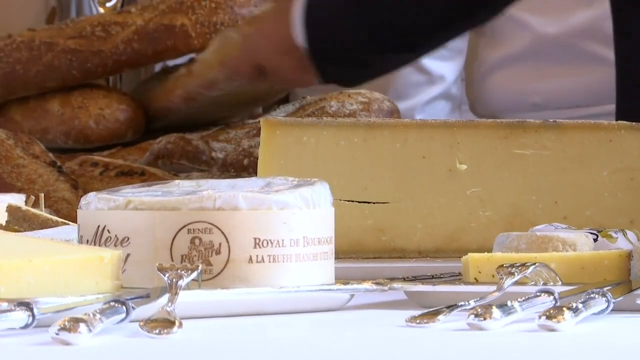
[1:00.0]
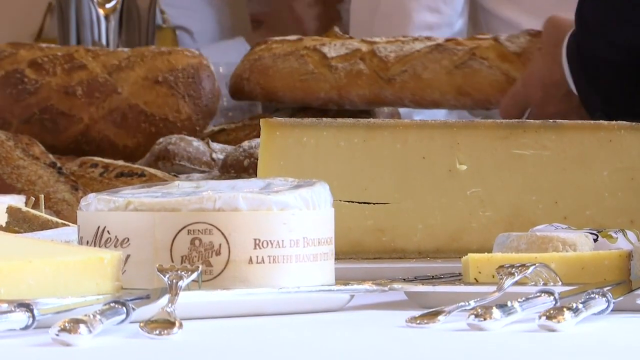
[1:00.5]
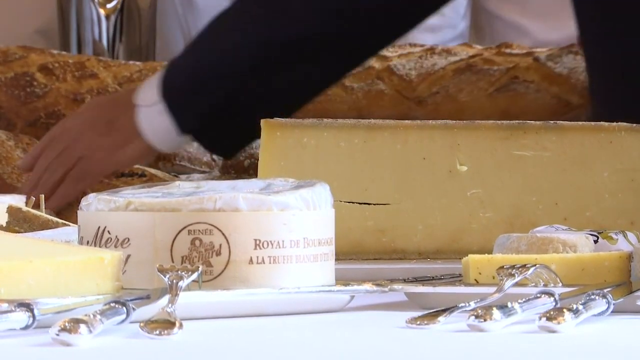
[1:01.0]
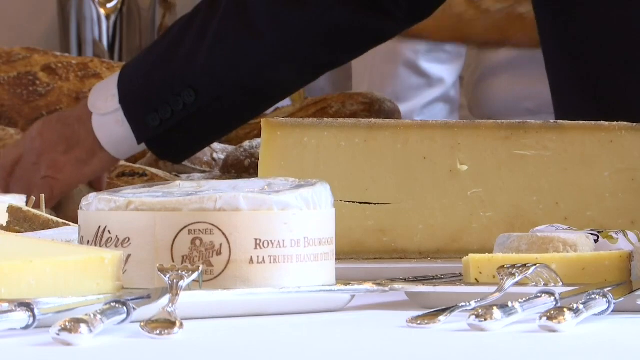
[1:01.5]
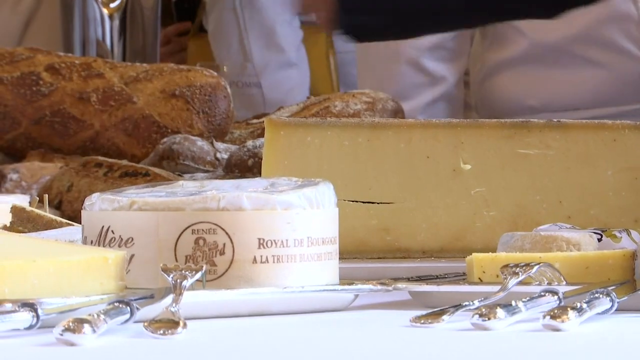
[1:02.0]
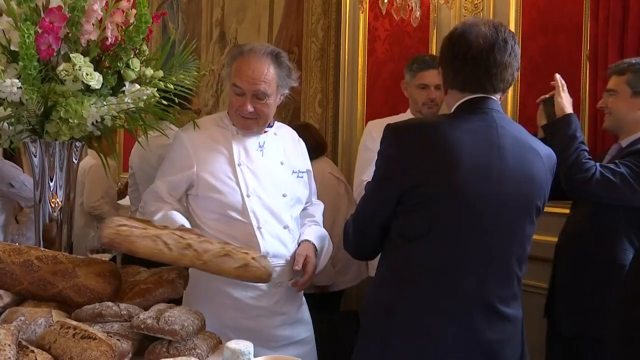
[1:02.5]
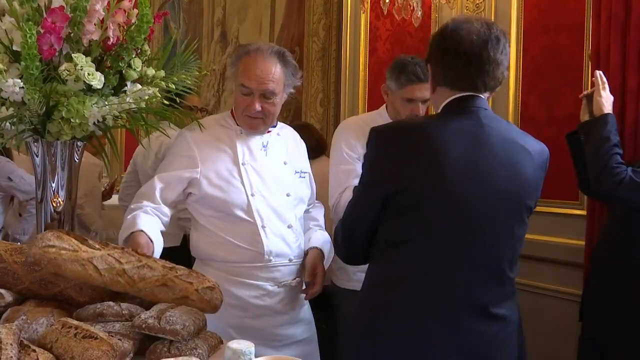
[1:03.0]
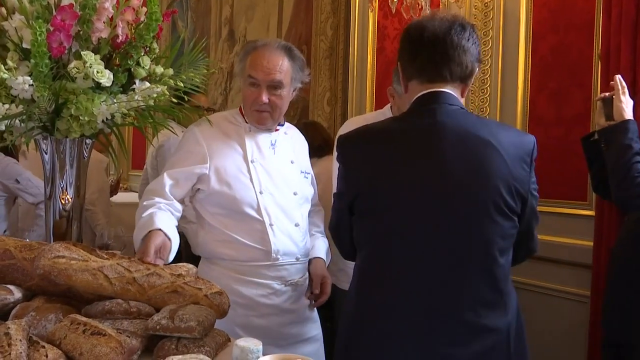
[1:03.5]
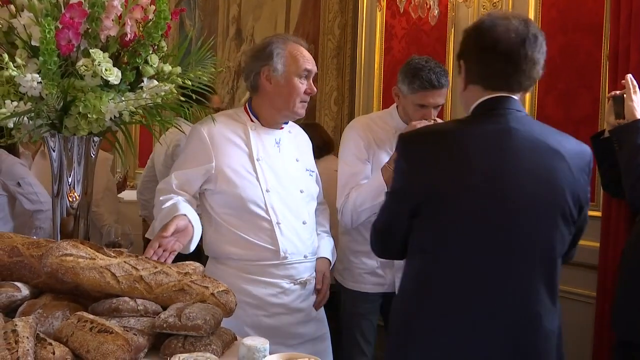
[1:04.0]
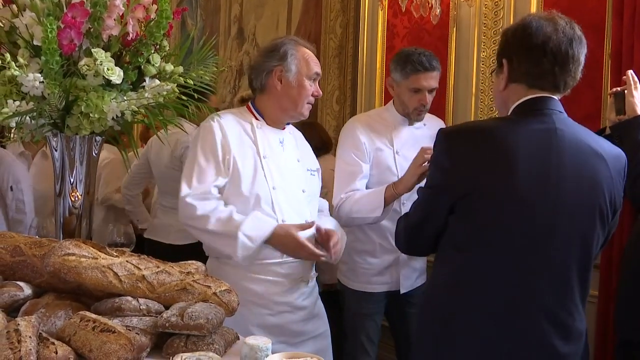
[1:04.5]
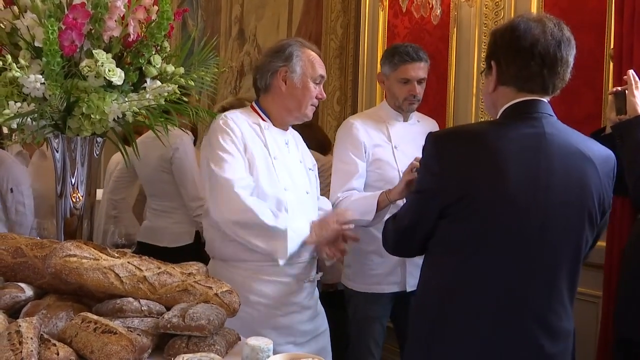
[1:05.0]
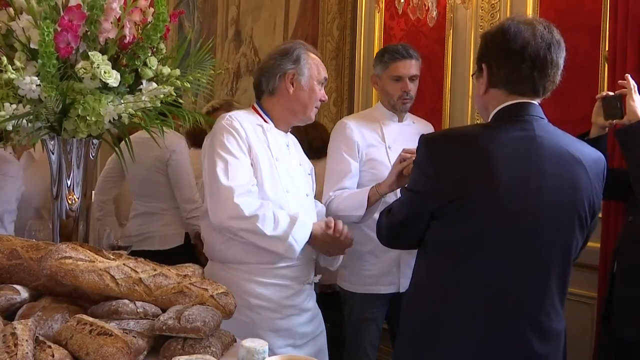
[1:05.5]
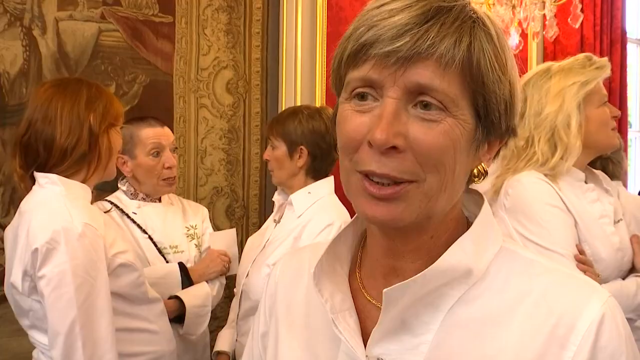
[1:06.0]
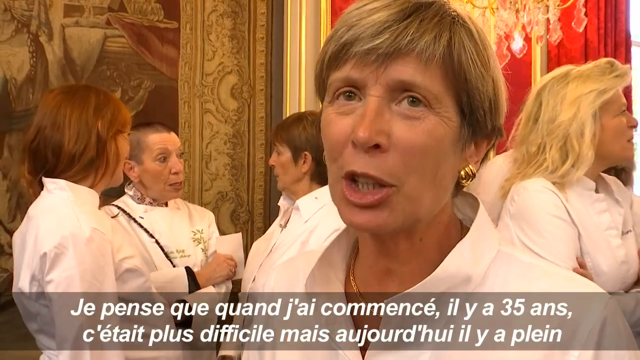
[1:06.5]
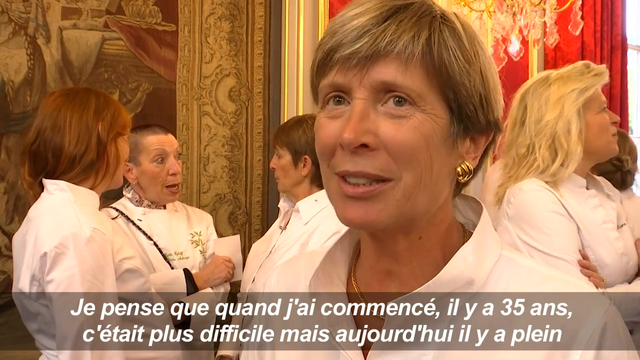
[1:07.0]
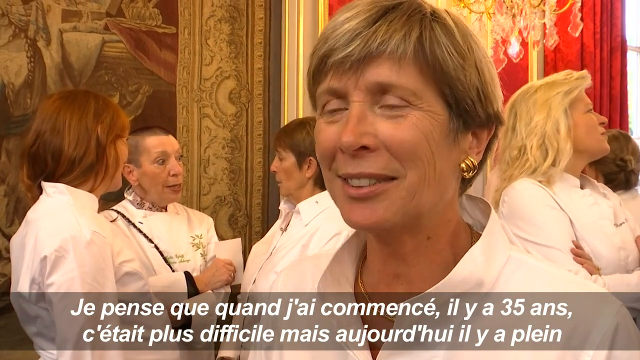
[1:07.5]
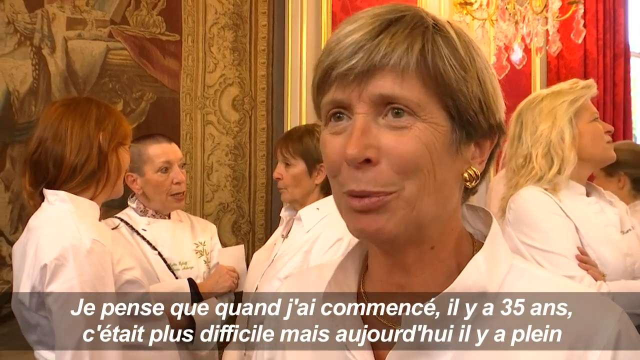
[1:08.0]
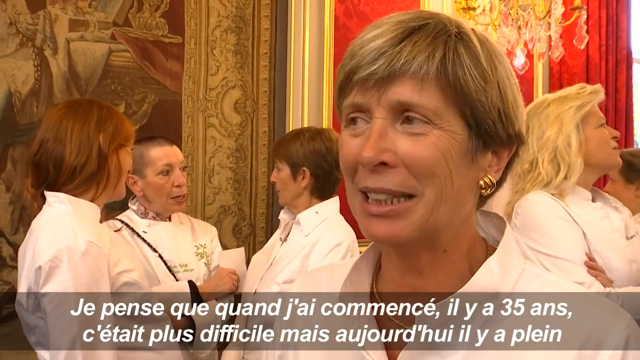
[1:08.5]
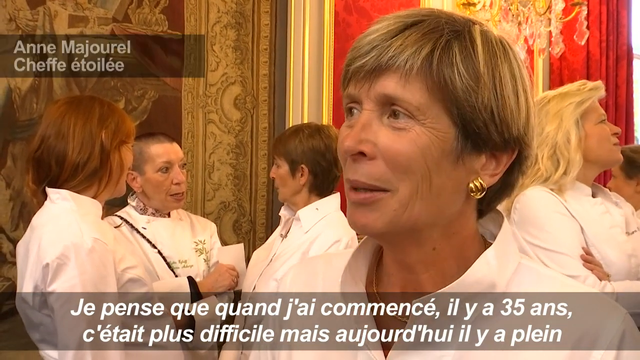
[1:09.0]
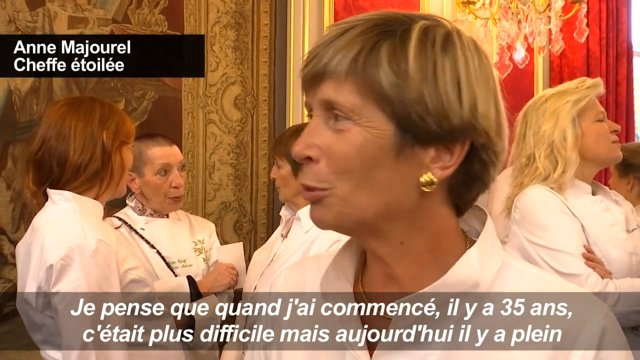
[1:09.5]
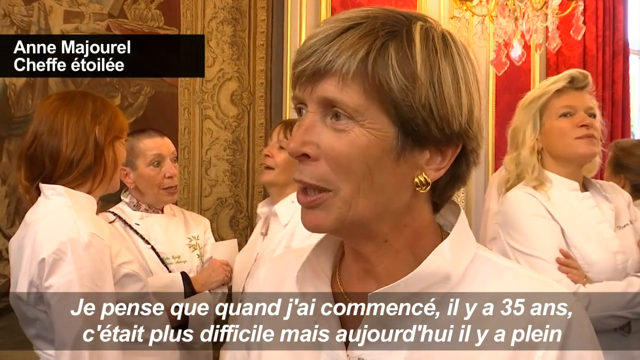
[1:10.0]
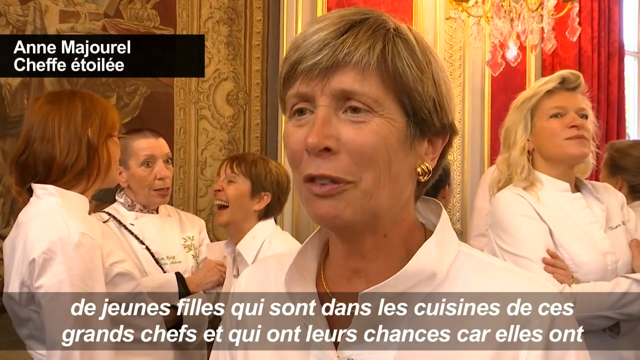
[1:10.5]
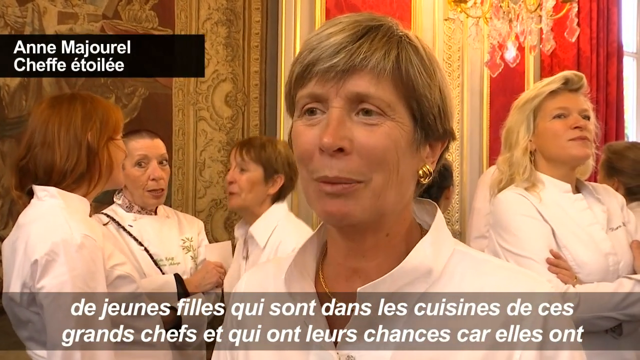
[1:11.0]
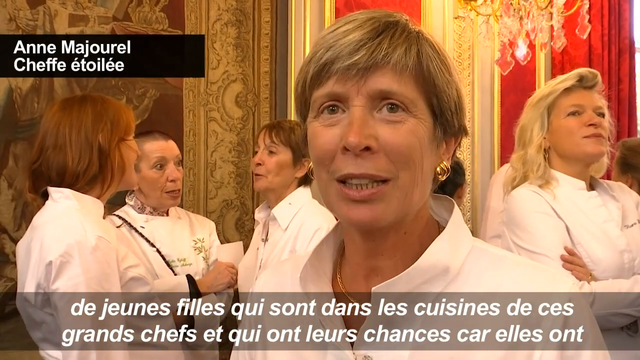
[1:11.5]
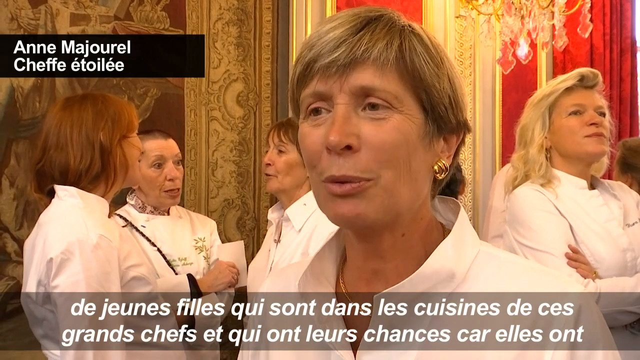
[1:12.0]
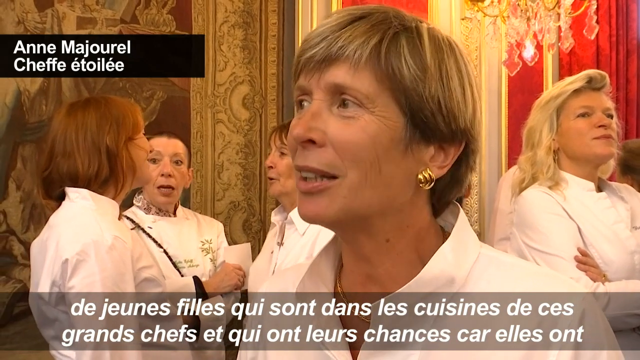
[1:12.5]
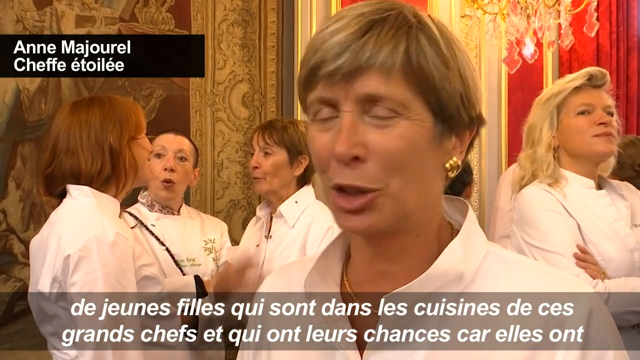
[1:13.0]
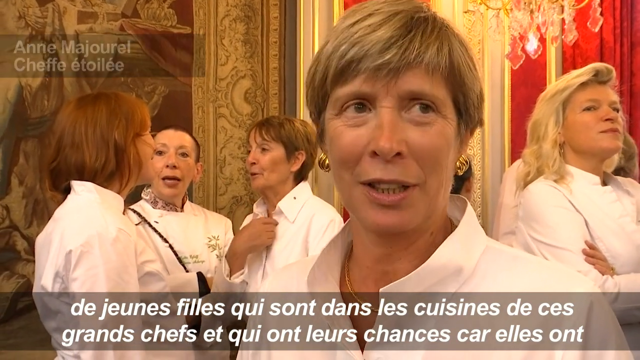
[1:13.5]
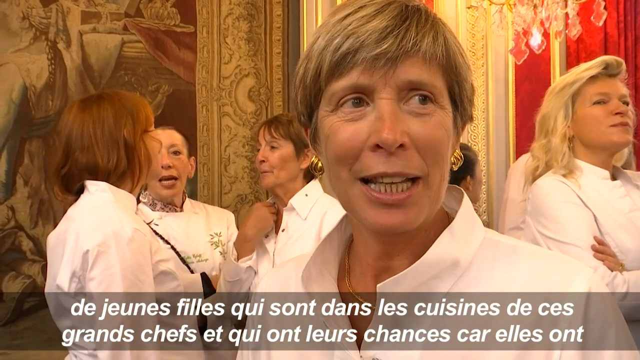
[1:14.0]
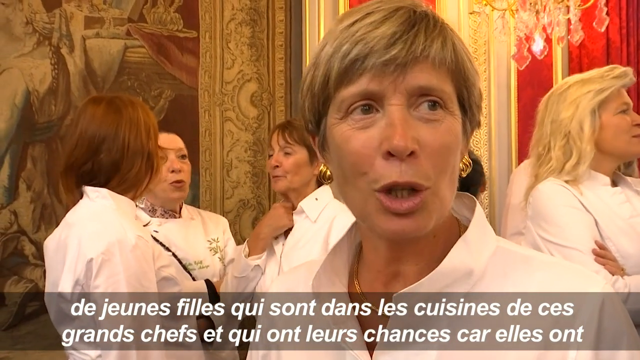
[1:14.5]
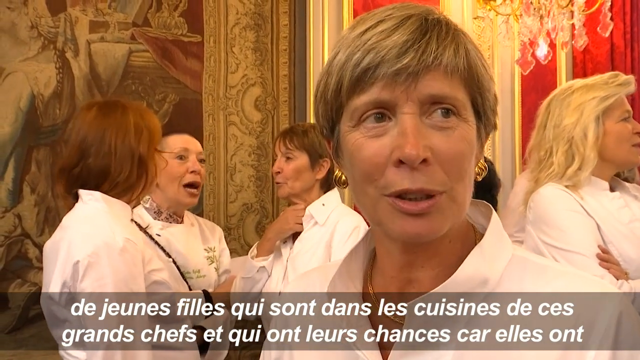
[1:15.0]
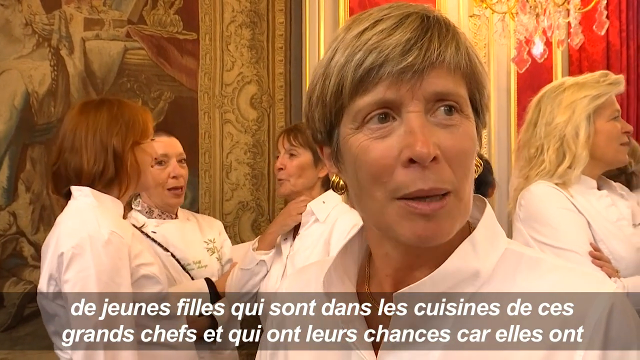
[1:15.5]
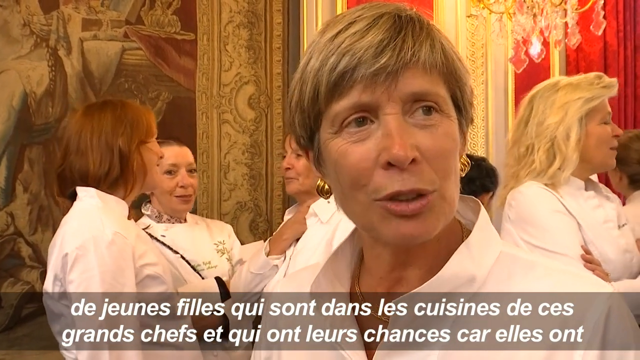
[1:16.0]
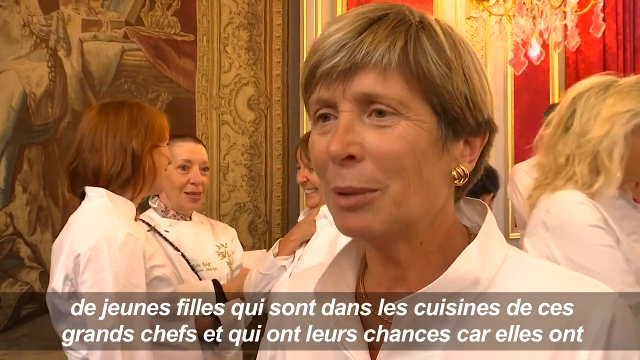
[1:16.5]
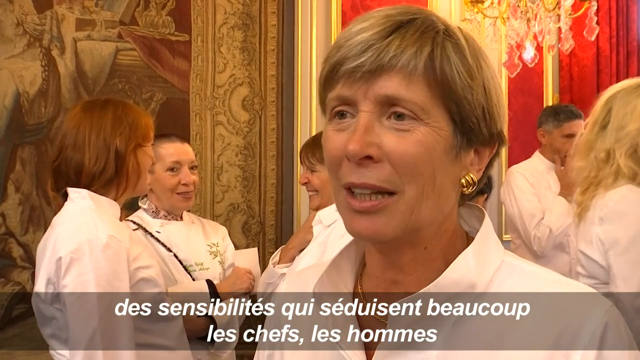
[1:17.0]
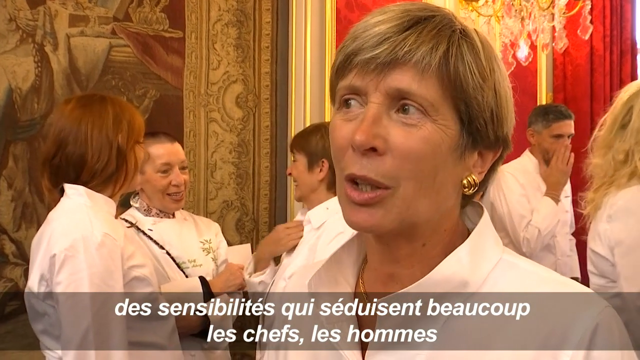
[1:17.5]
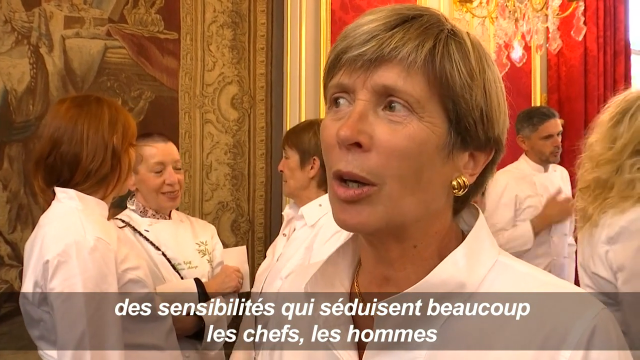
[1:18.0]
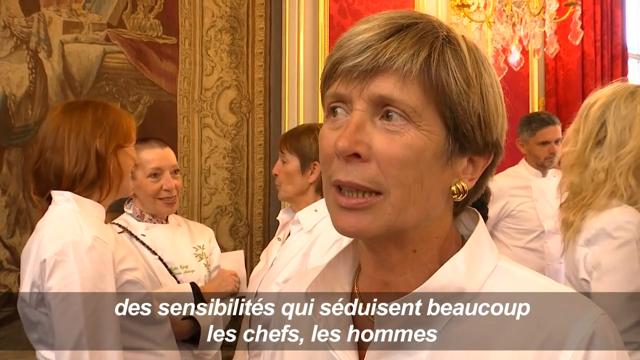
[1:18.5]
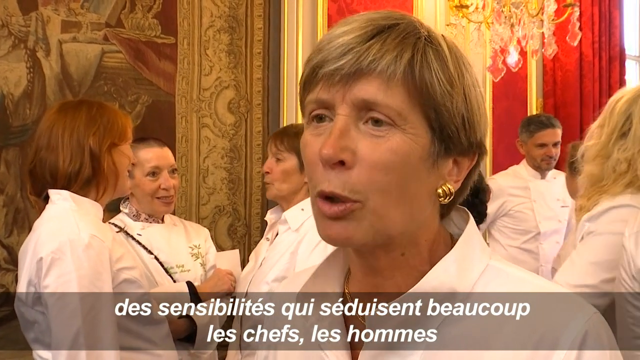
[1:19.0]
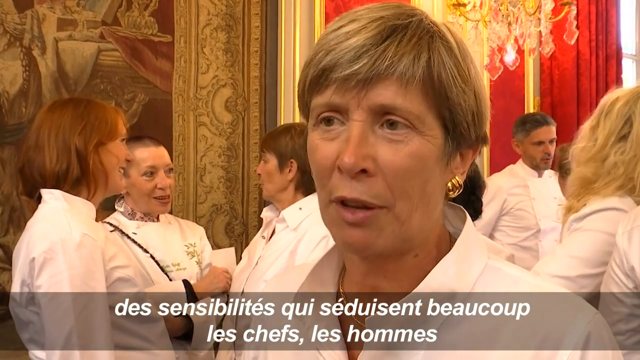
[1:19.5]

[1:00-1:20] Food is shown: cheese, something with text that includes the word "royal", and big sticks of fancy bread, baguettes. Someone reaches for the bread, and a chef is putting bread out or looking at it. People talk to someone, and then the video goes to a woman who is talking. She is Anne Majorelle, a chef, with short hair, earrings, a necklace and brown eyes, wearing a white chef's jacket. The place is very fancy, with chandeliers, red curtains and fancy paintings on the walls. People are dressed up or wear chef's jackets, which are mostly white, though some have writing on them.